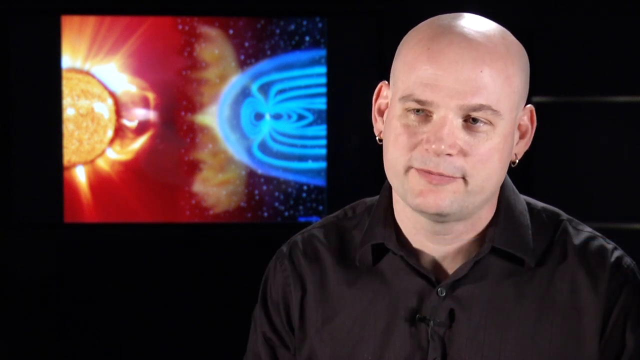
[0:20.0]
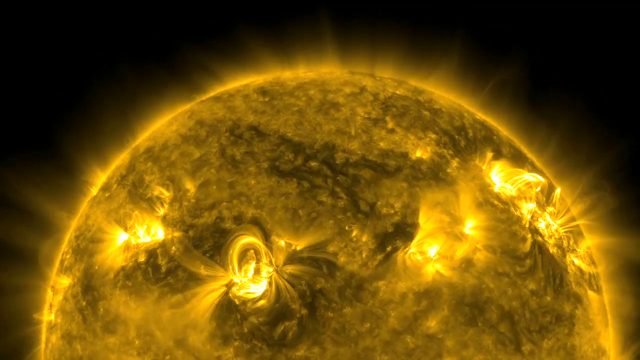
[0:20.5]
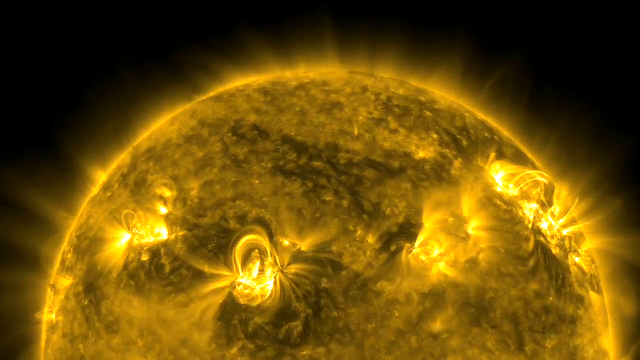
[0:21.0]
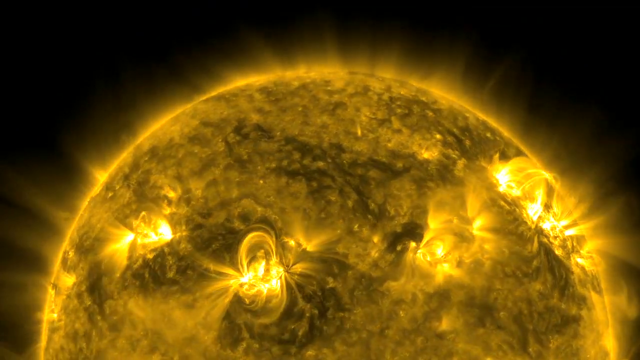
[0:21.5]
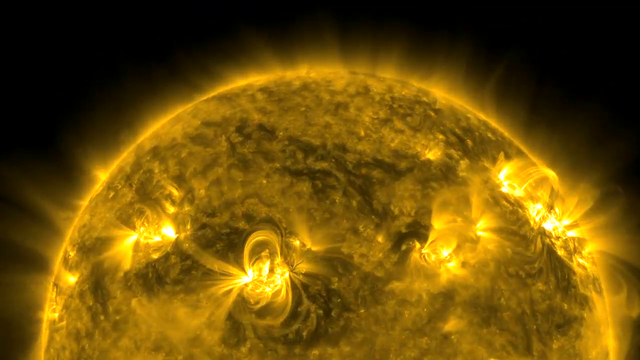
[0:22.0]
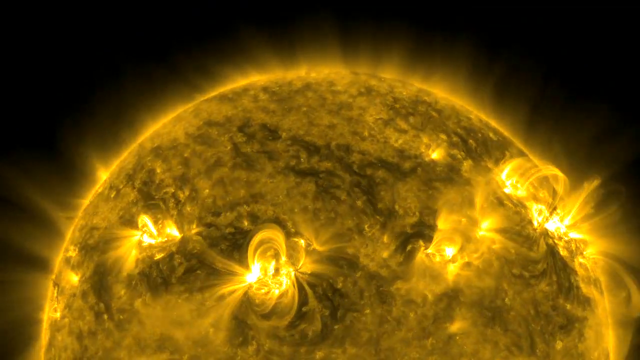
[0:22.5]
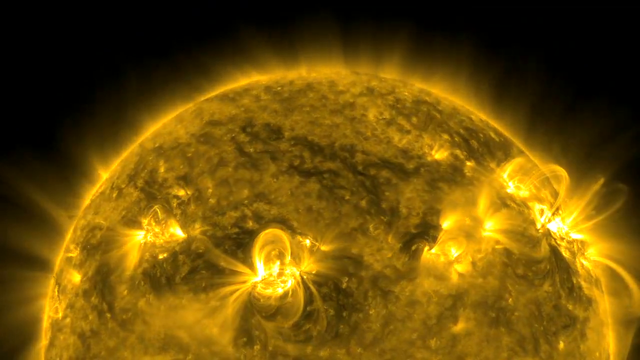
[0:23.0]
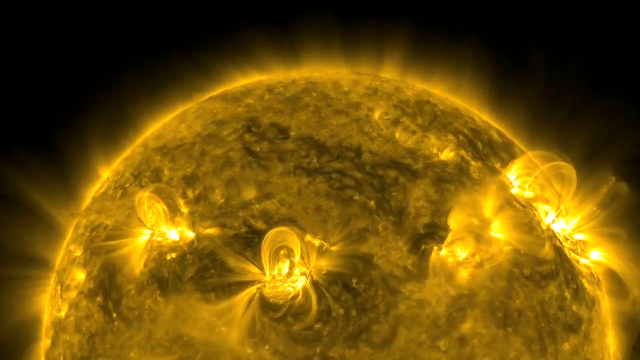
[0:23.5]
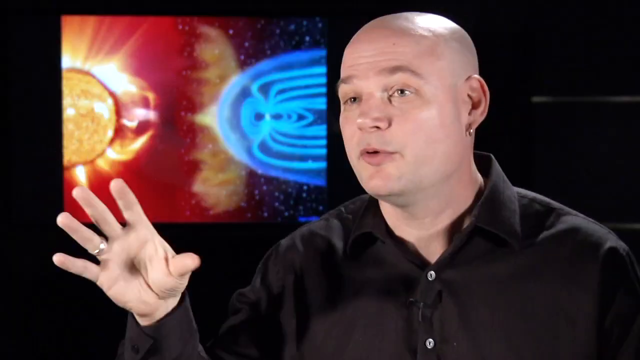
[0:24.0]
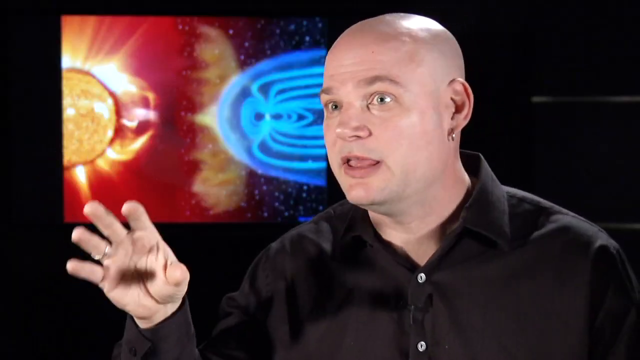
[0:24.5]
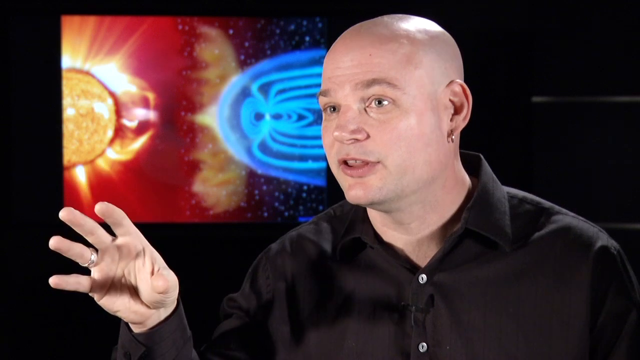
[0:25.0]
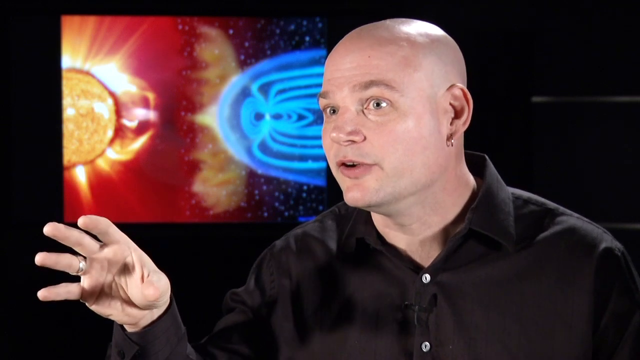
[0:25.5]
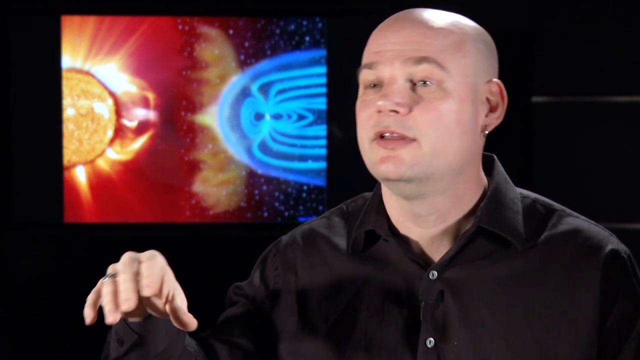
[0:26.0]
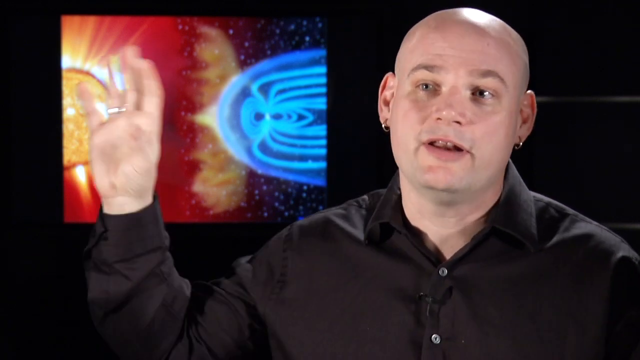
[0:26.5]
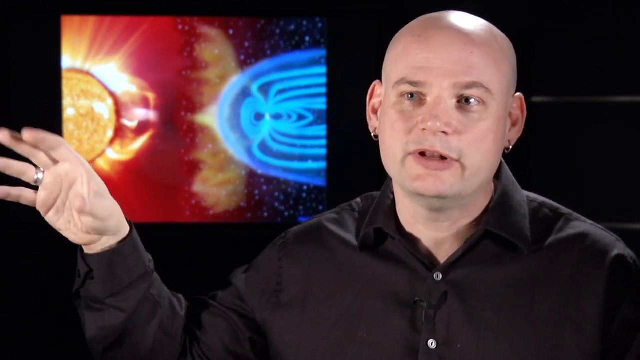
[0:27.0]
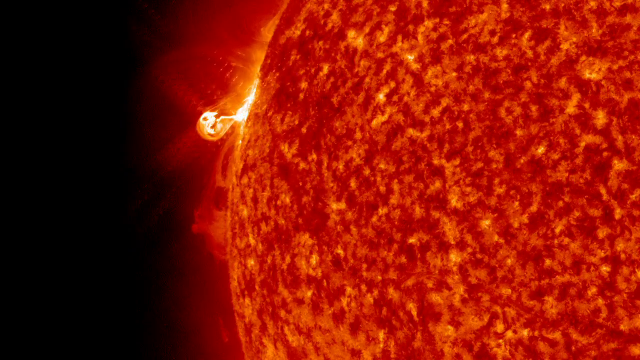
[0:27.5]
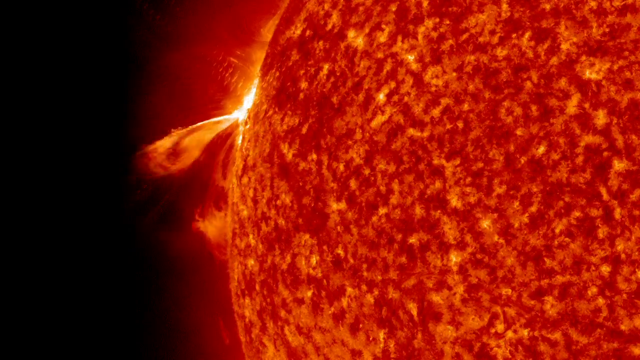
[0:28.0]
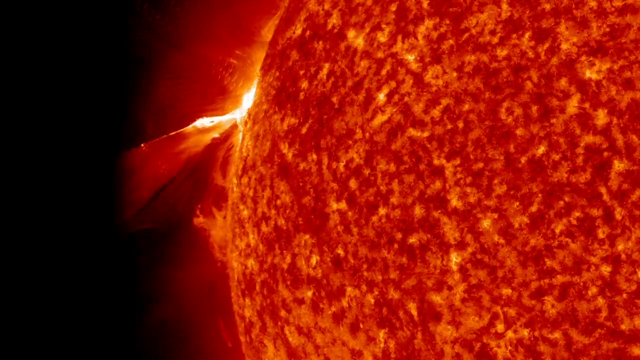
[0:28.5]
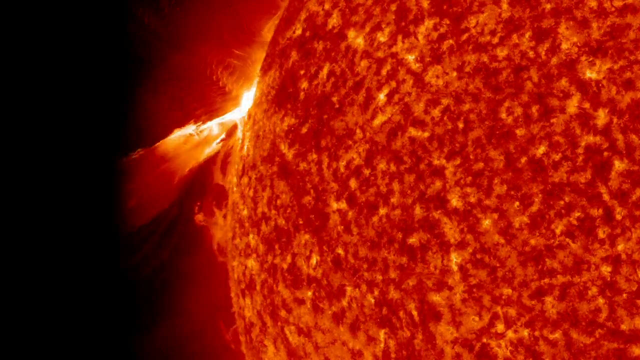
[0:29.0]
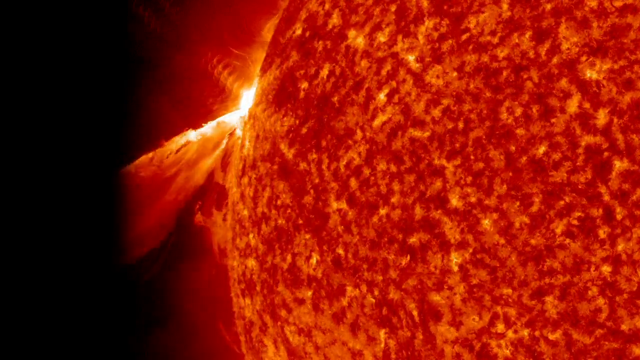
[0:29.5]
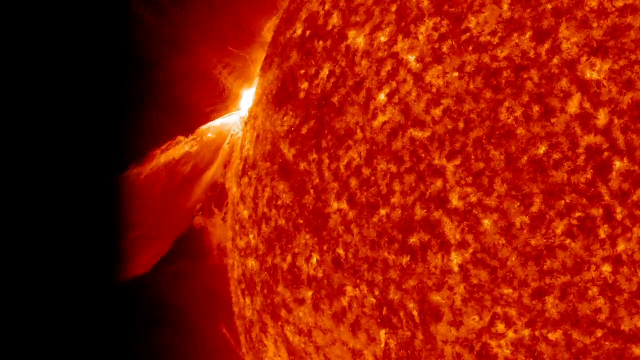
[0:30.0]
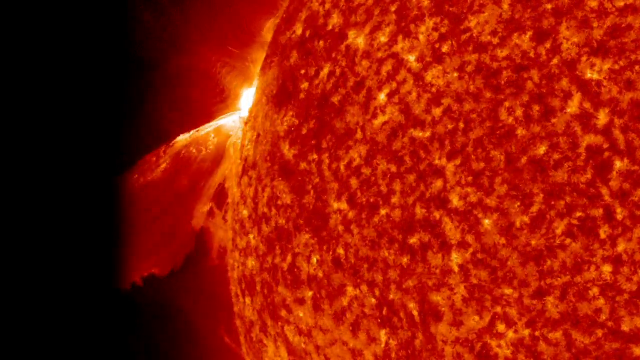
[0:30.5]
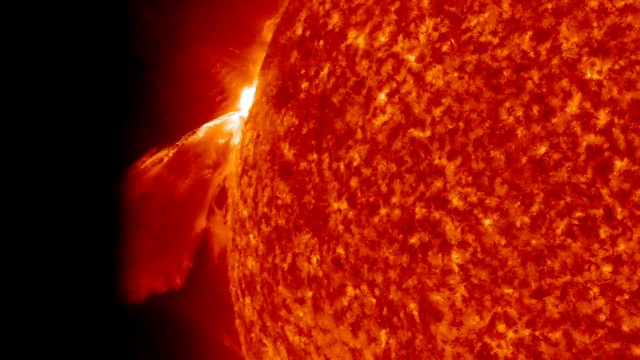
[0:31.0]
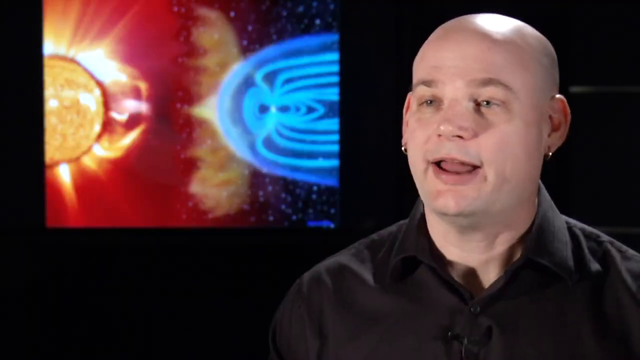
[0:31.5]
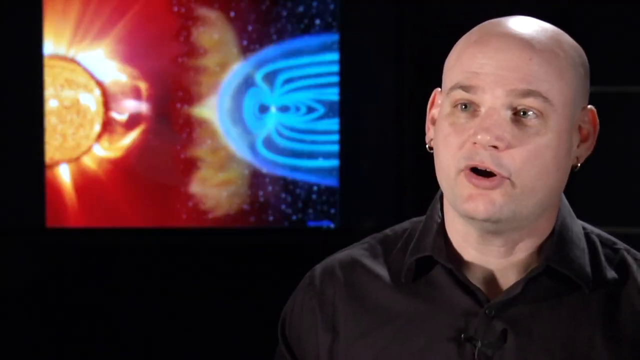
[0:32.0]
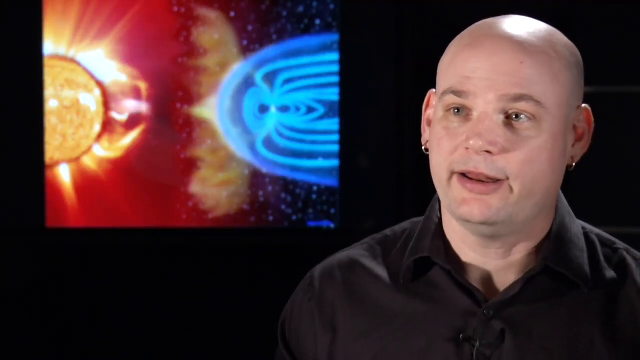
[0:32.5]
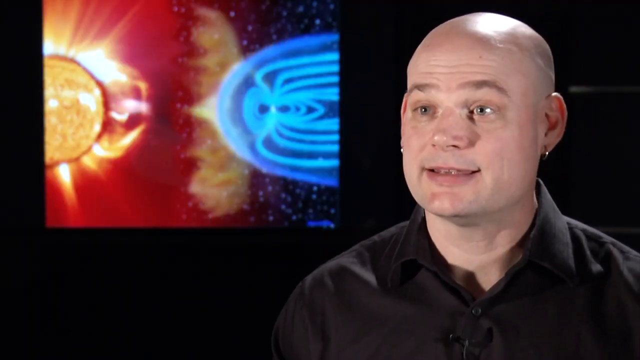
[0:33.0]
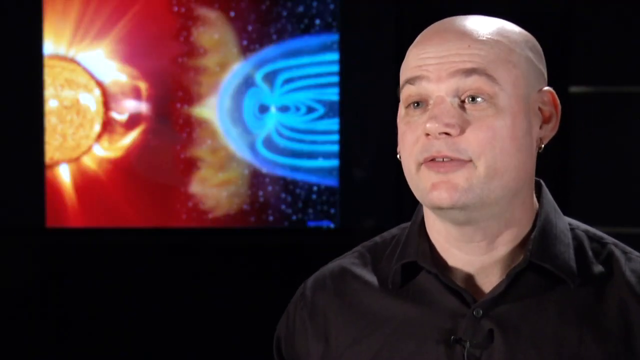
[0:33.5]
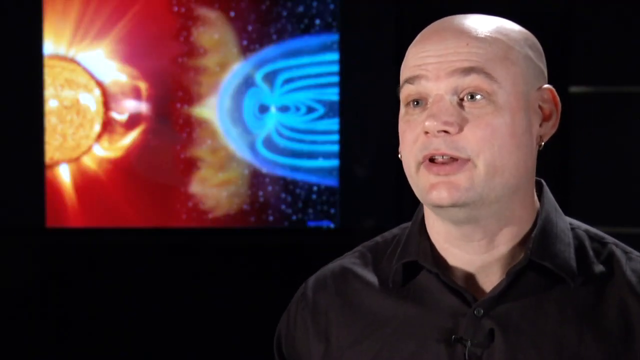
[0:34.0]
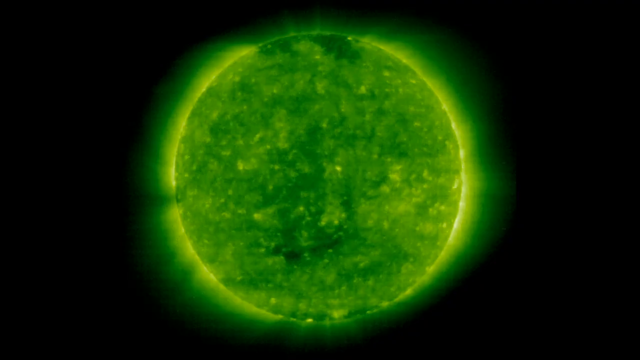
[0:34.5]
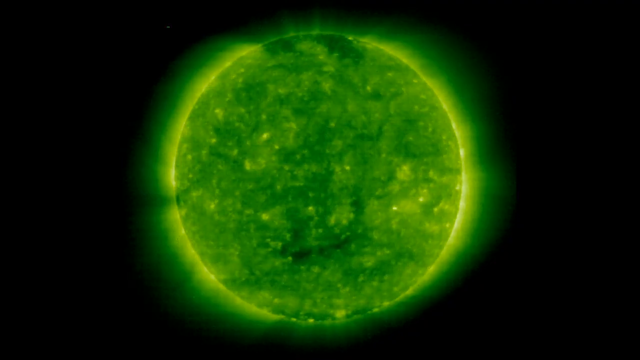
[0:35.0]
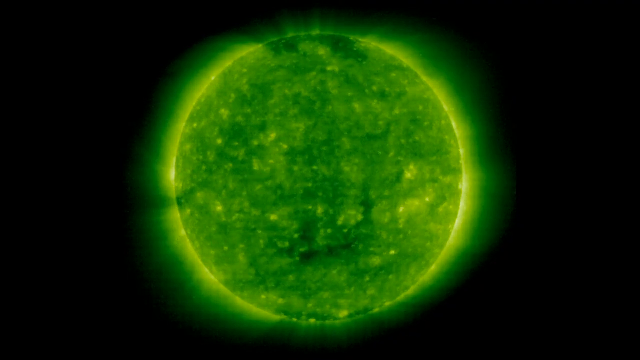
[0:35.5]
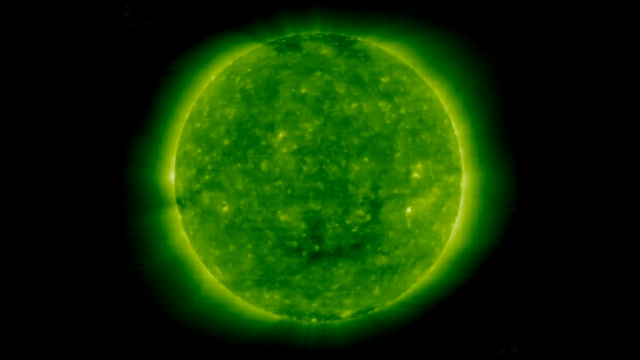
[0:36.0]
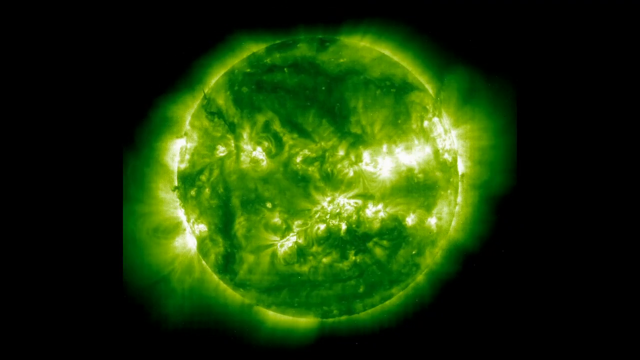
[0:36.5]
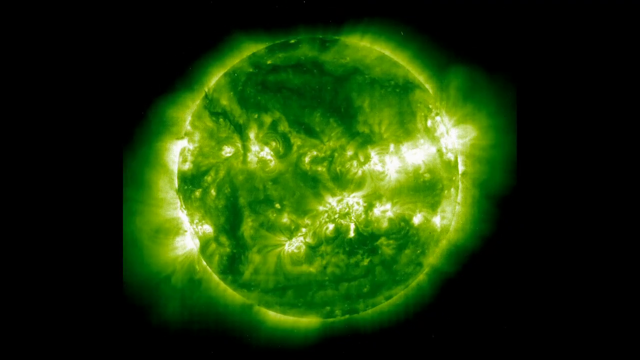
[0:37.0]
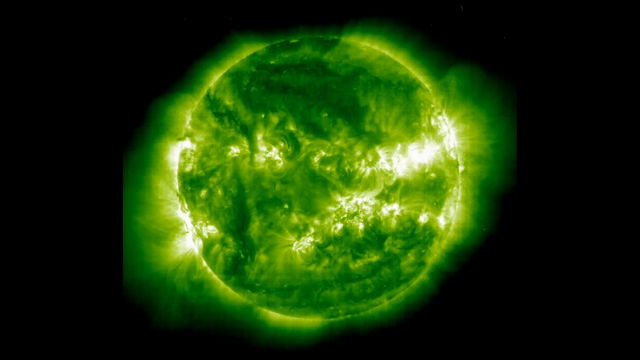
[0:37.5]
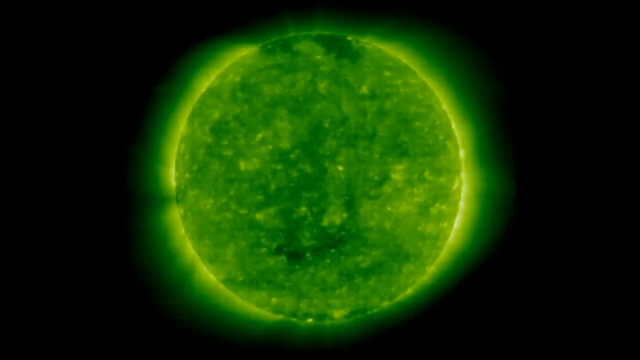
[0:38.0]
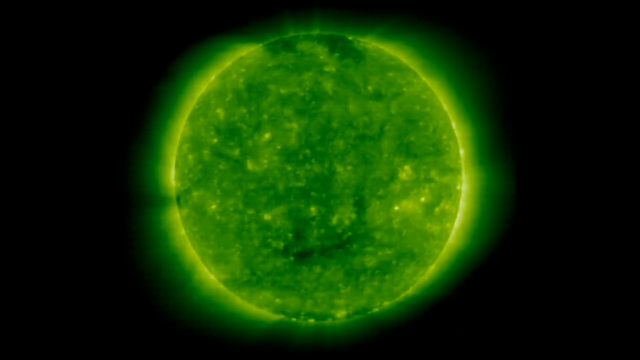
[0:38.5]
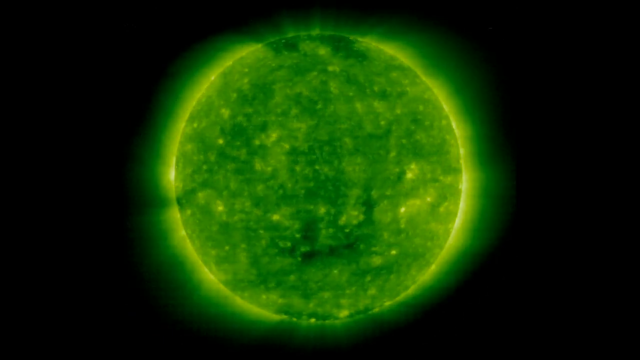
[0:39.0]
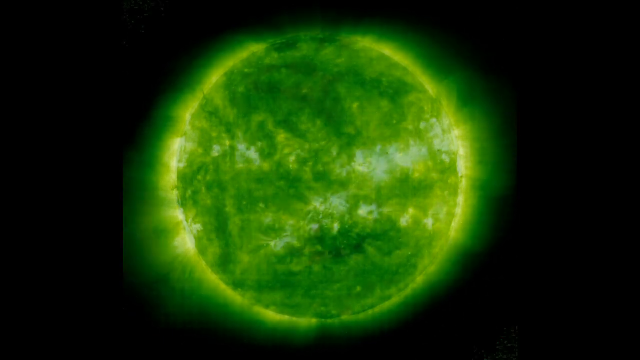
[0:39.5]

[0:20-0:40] The scene changes to a very large view of the sun, bright and yellow, with storms on its surface against a completely black background. The man is then talking on the right side with his right hand up, and he moves his right hand more to the left. Next, an image shows a very large red and orange sun on the right side in a very close side view, with a solar flare shooting out from its surface slightly above the center. The man talks on the right again, and then the scene changes to a rotating sun in the middle that looks green, turning to the right. White areas that look like solar flares appear in its center, then the sun looks completely green, and then white areas of light representing solar flares appear.